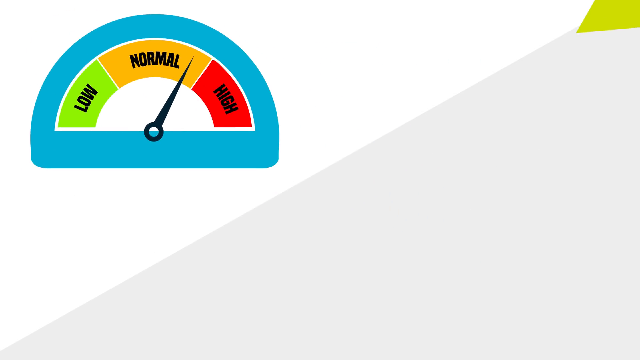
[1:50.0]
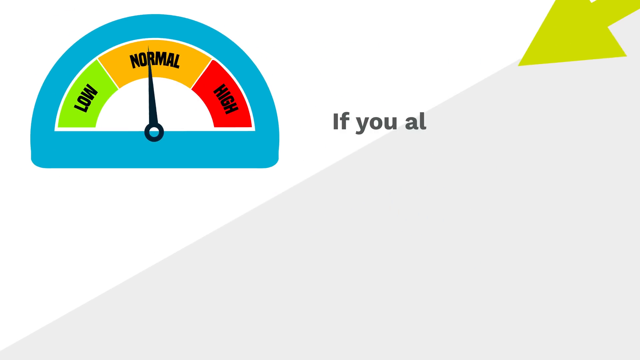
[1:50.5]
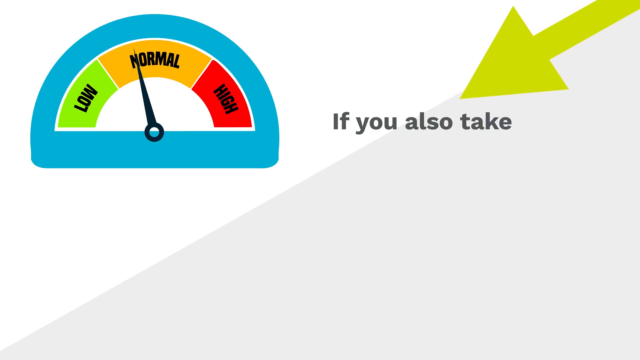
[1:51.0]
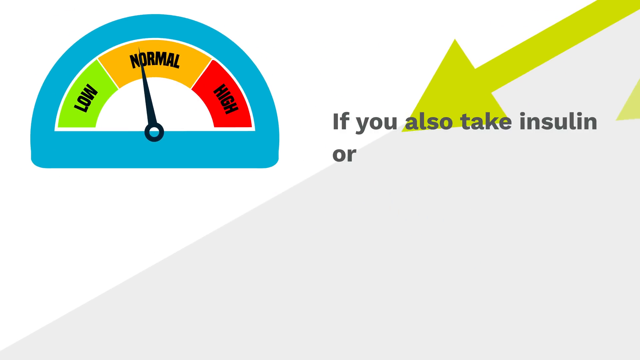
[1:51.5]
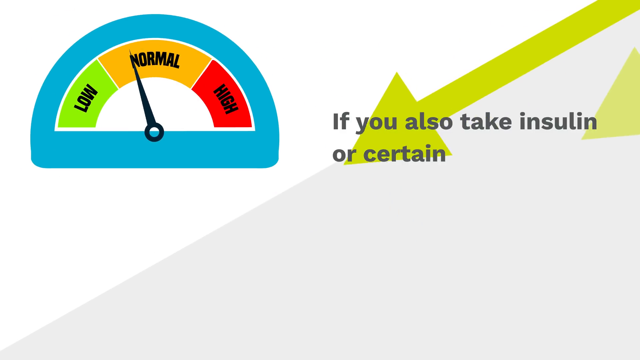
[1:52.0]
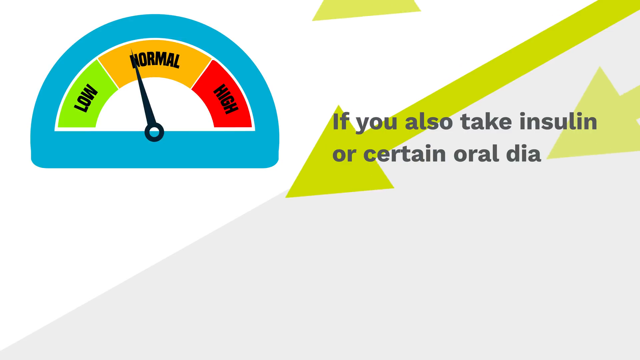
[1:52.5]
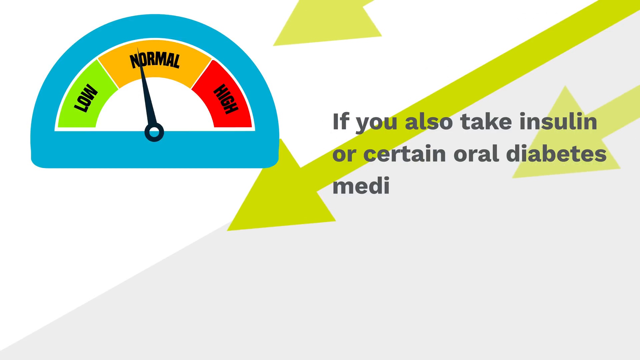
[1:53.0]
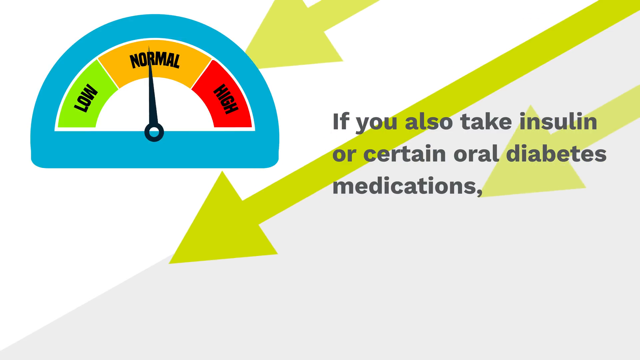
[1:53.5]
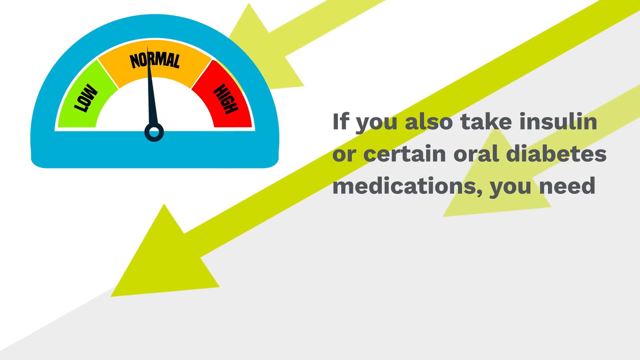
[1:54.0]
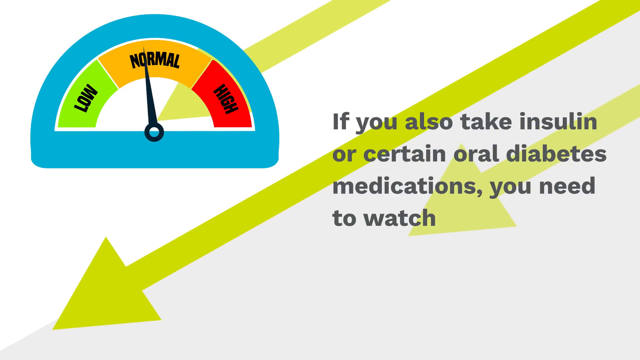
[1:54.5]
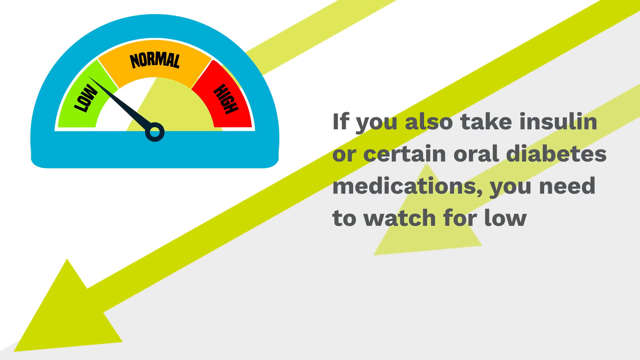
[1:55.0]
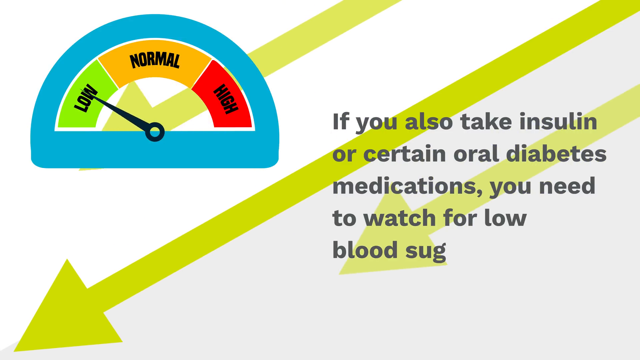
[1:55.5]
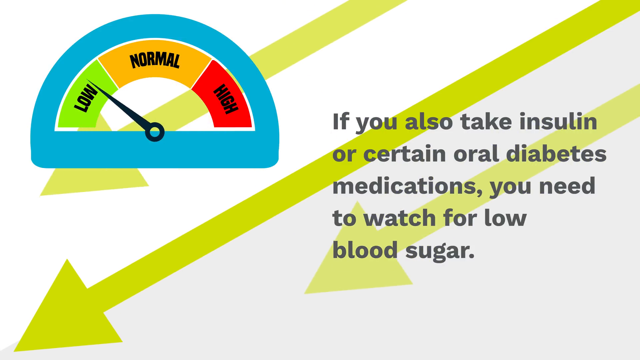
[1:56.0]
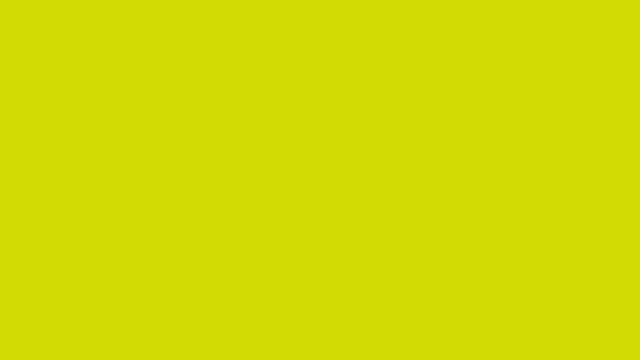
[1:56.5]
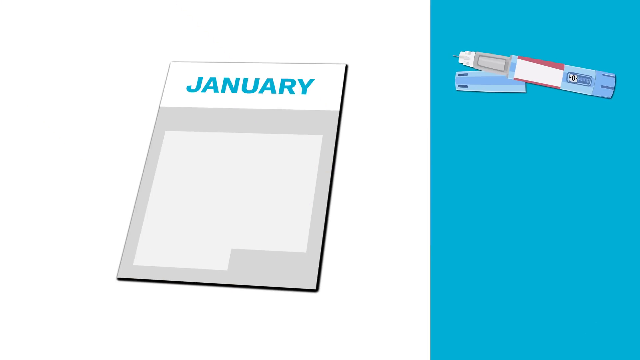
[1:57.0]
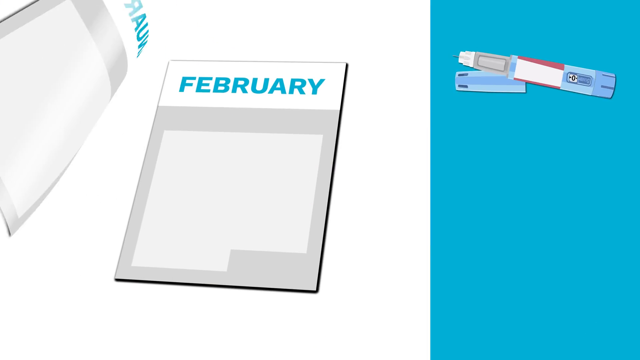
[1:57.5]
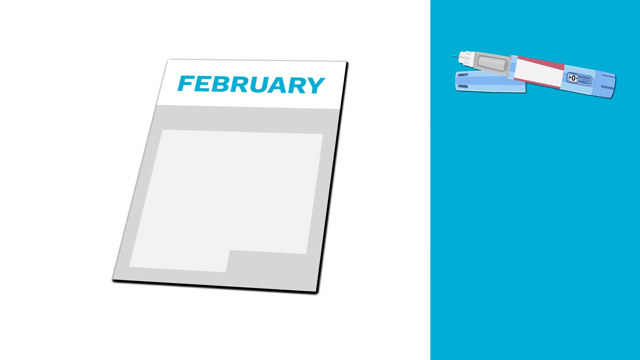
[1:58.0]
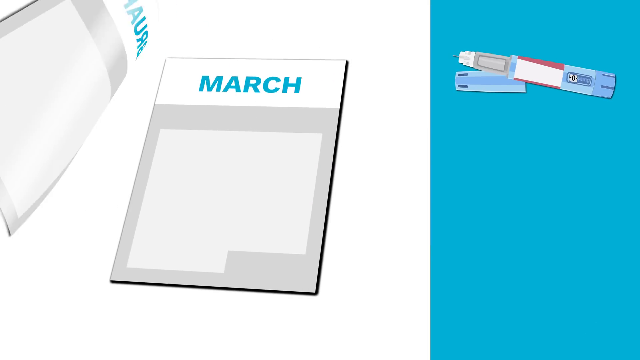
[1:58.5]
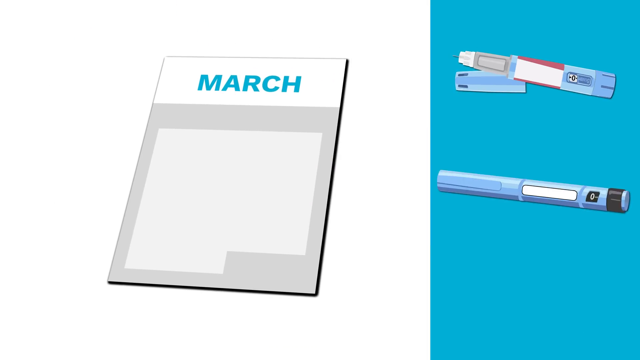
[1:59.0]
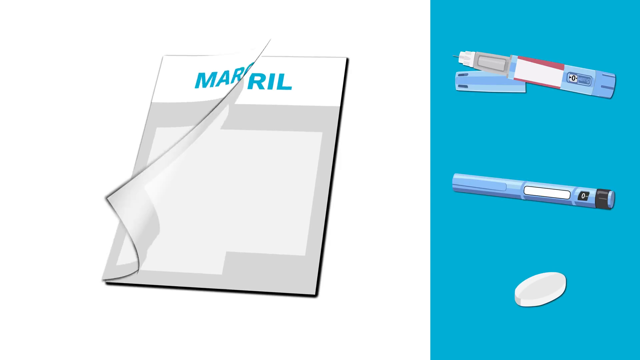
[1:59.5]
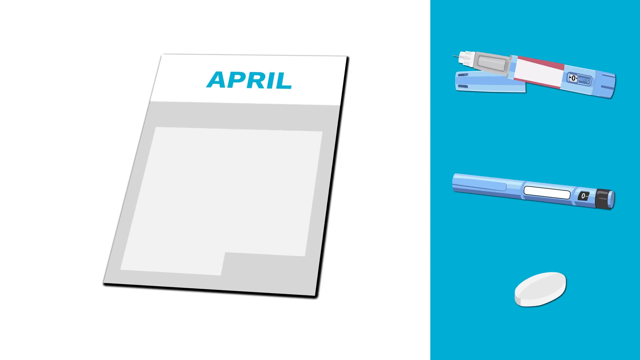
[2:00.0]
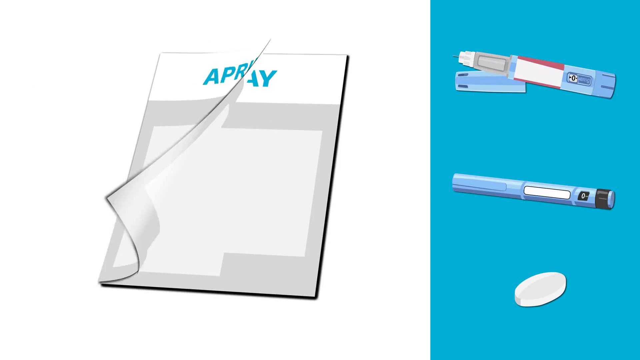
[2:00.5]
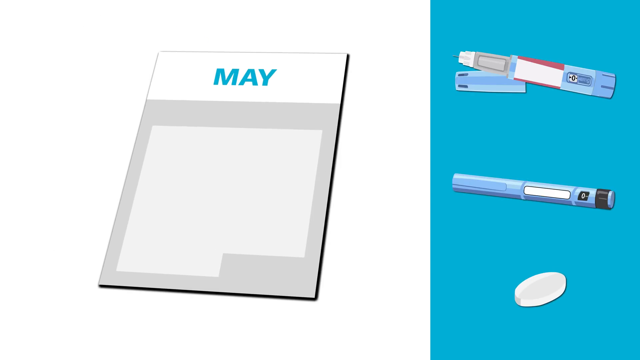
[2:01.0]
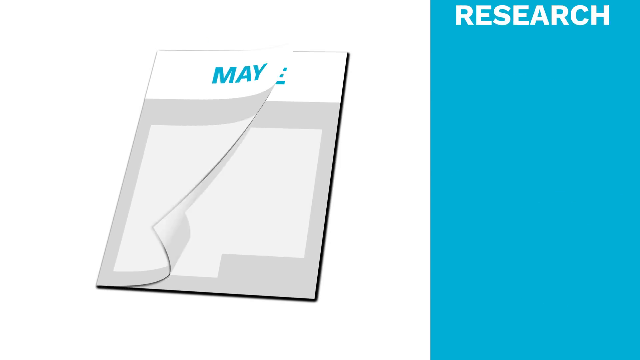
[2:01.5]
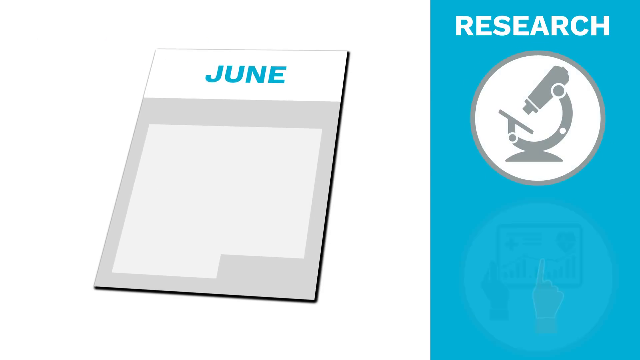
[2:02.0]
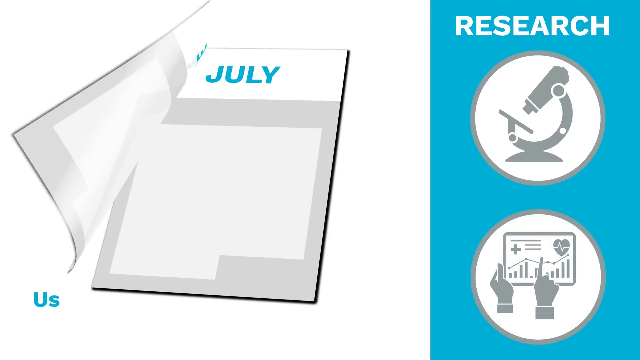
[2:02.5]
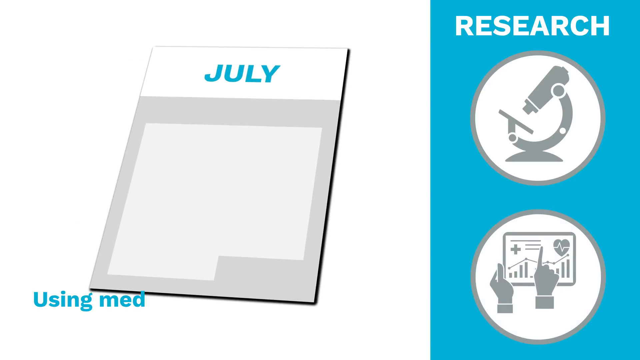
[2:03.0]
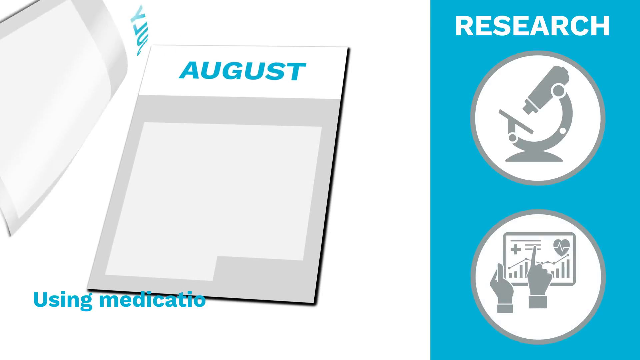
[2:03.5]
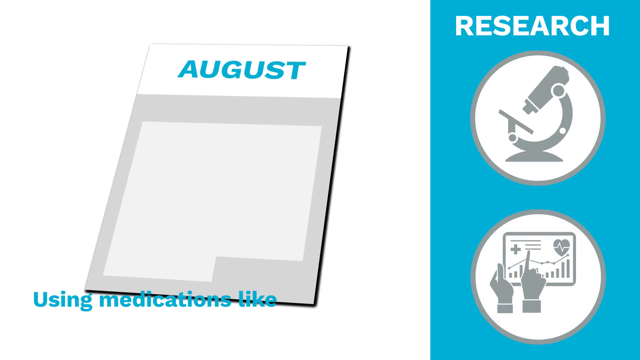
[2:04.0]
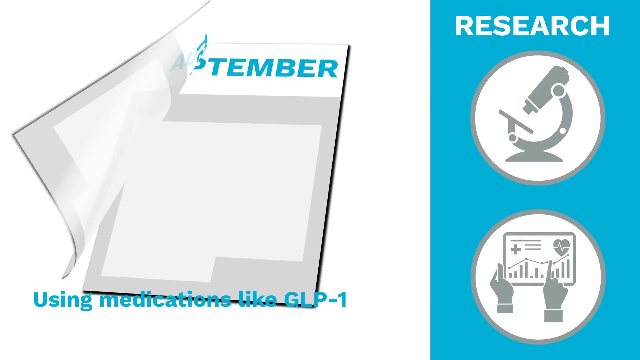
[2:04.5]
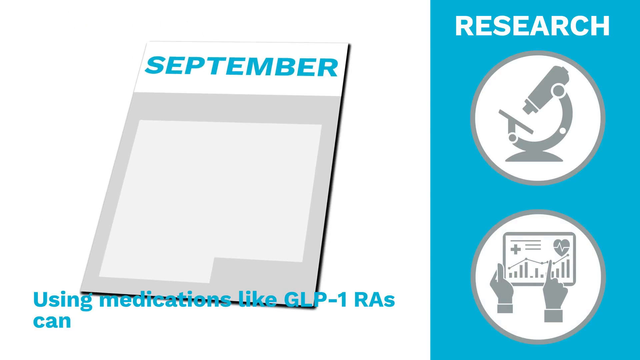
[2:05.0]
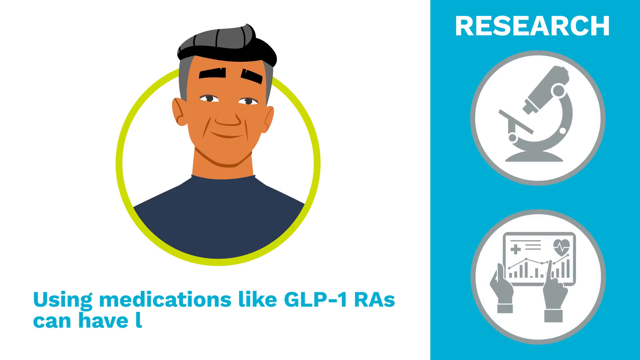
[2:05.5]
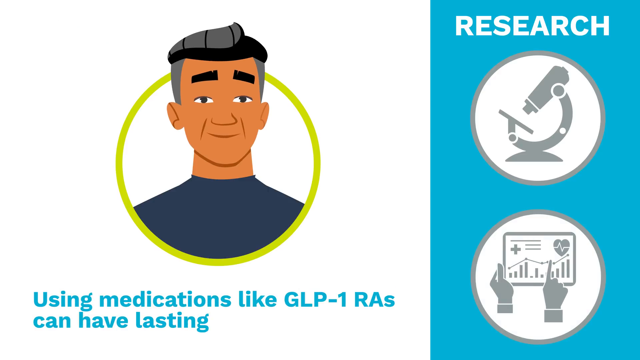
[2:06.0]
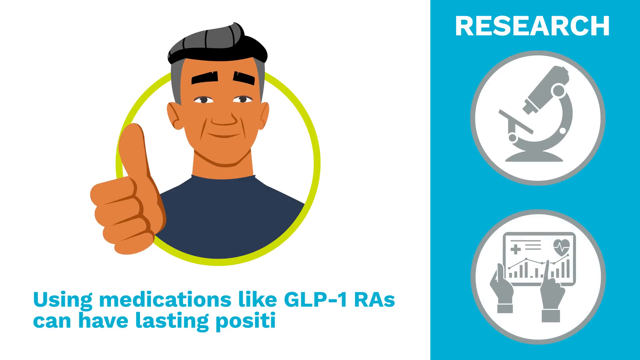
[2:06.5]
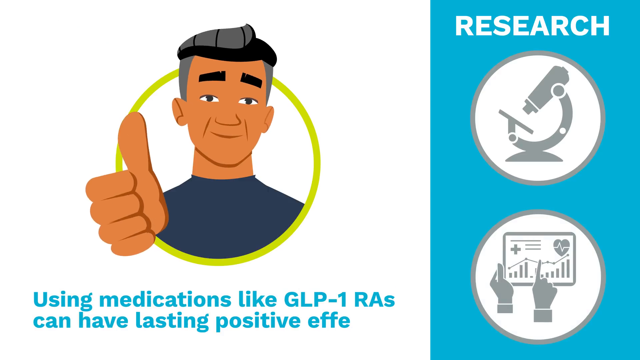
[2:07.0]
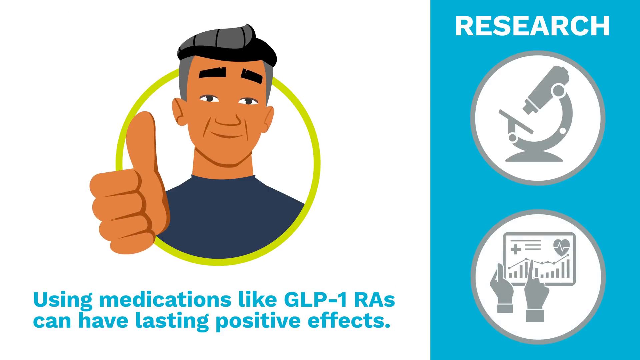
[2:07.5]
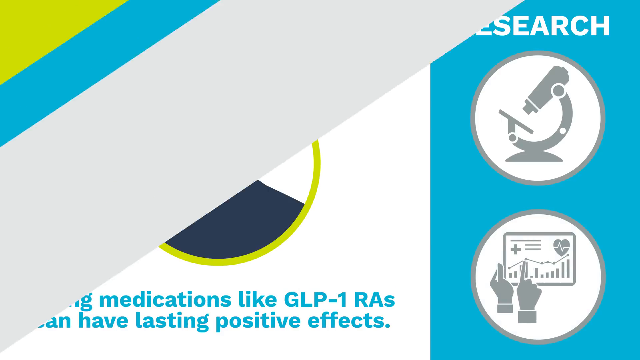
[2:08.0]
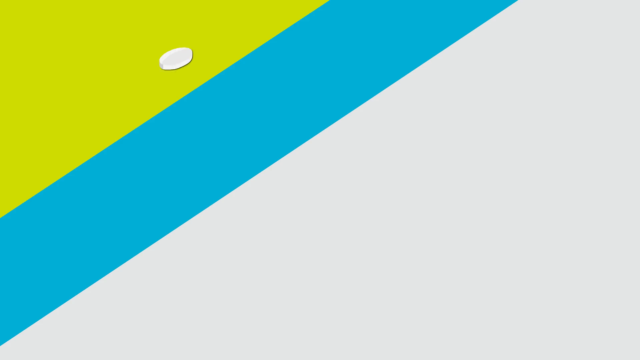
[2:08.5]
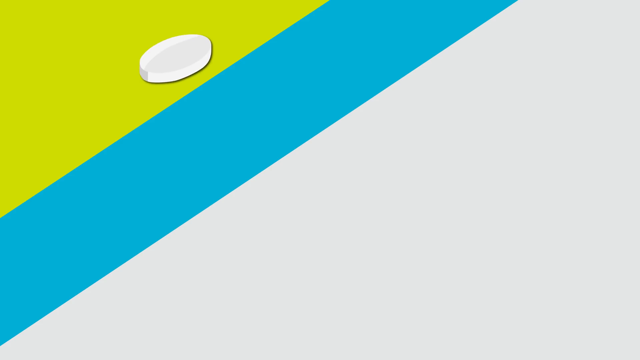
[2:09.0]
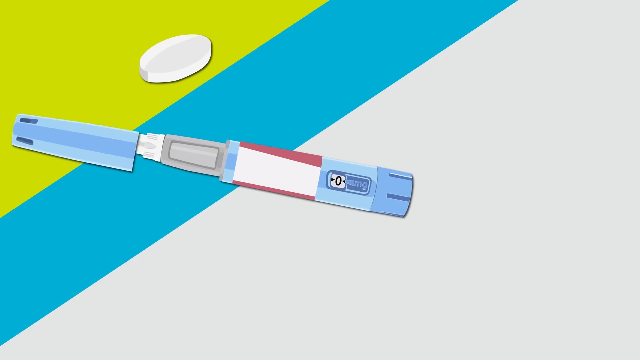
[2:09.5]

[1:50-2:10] Green arrows move from left to right on a slide advising that anyone taking insulin or certain other things should consult about their use of GLP-RAs. Next is a calendar slide with a white background on the left and a blue background on the right third. On the left, a calendar with teal lettering has one month at a time pulled off, while on the right, against the blue background, the methods of taking GLP-RAs are shown: a daily shot, a once-weekly shot, and a pill. The video then shows research with a telescope and someone working, with the message "using medications like GLP-1 can have lasting positive benefits." It closes with a slide of diagonal stripes, green in the upper left, blue in the center, and gray on the right, with a picture of the white pill, probably the daily shot, and the weekly shot.